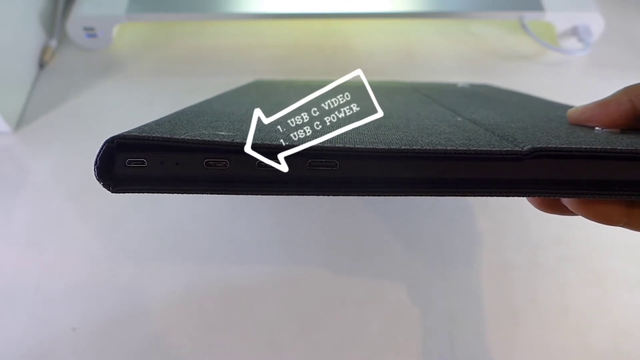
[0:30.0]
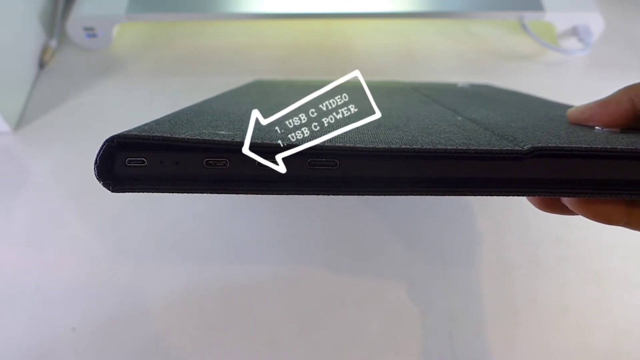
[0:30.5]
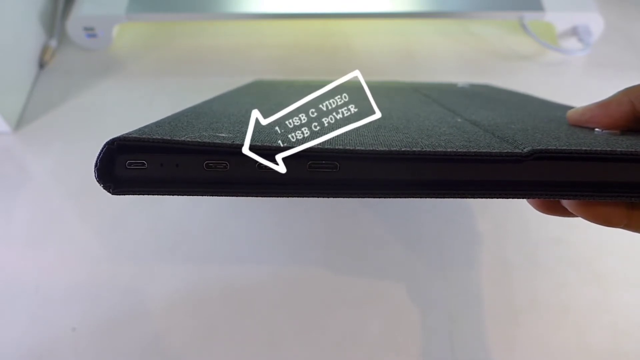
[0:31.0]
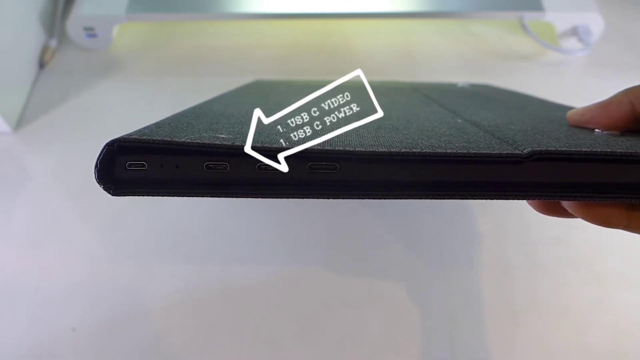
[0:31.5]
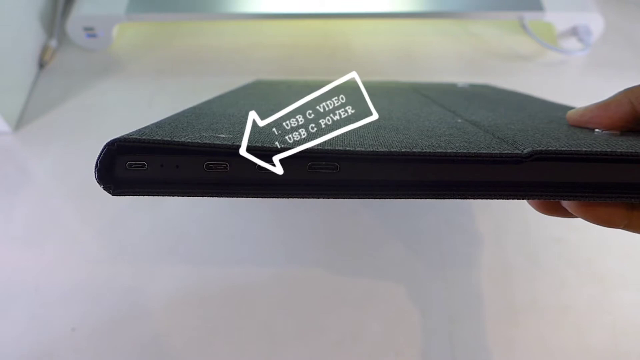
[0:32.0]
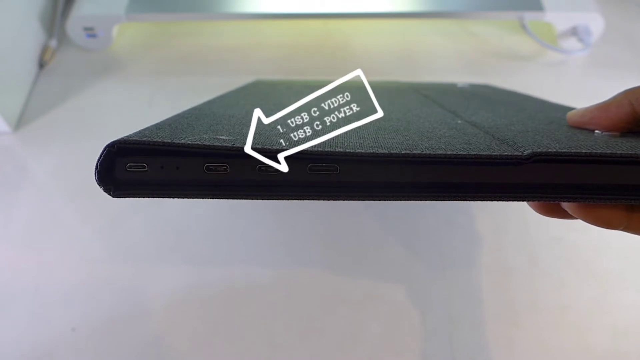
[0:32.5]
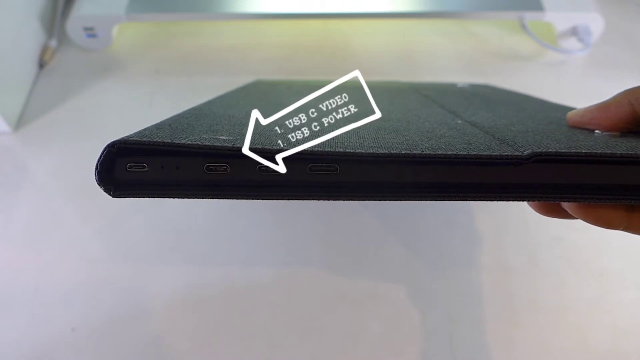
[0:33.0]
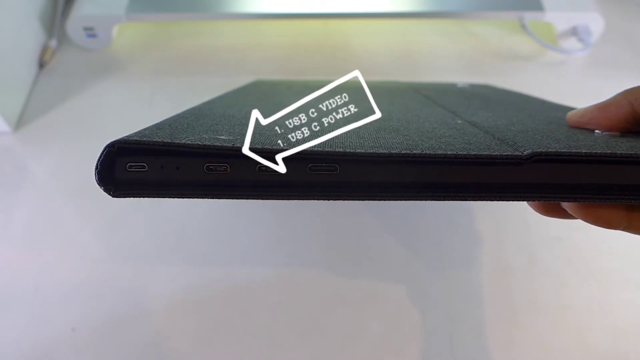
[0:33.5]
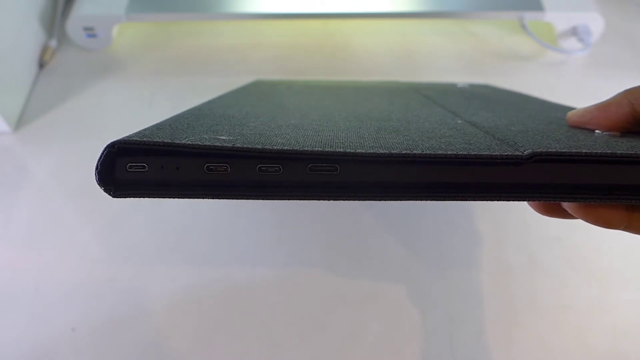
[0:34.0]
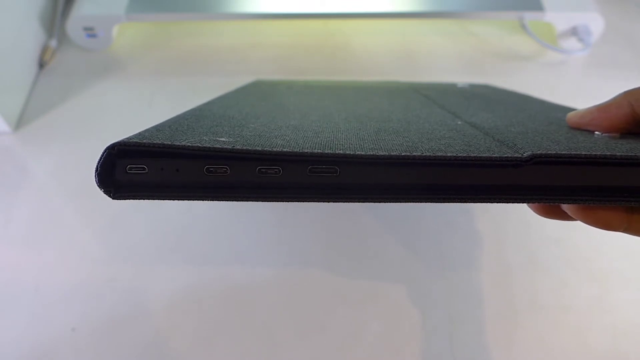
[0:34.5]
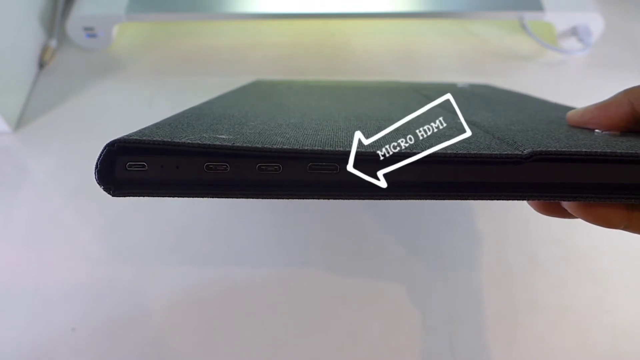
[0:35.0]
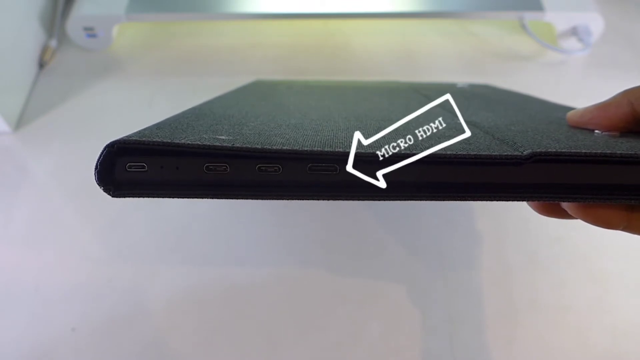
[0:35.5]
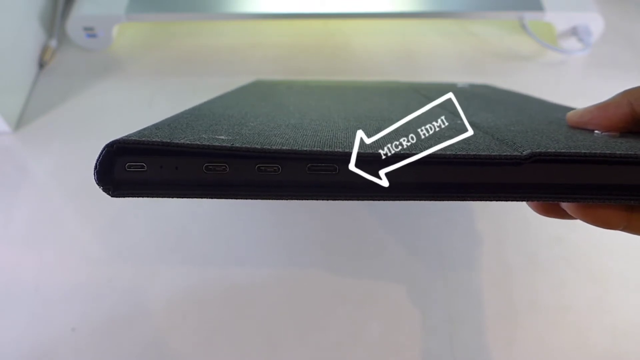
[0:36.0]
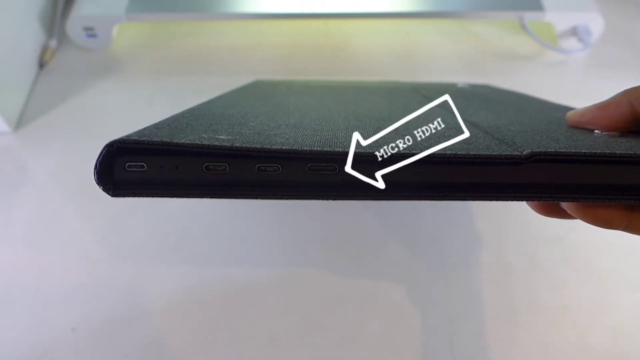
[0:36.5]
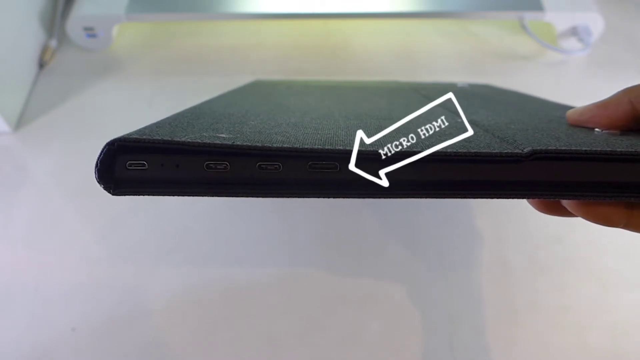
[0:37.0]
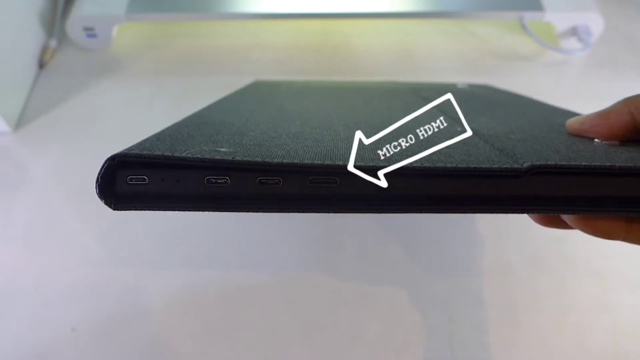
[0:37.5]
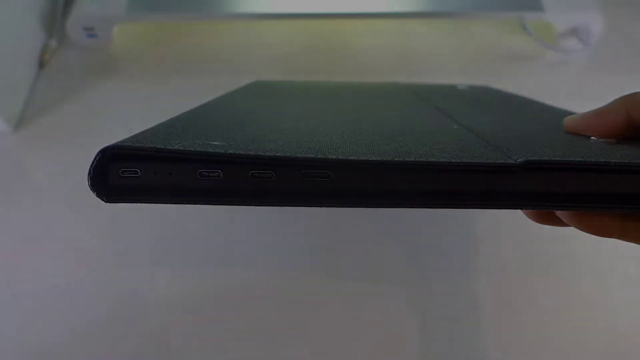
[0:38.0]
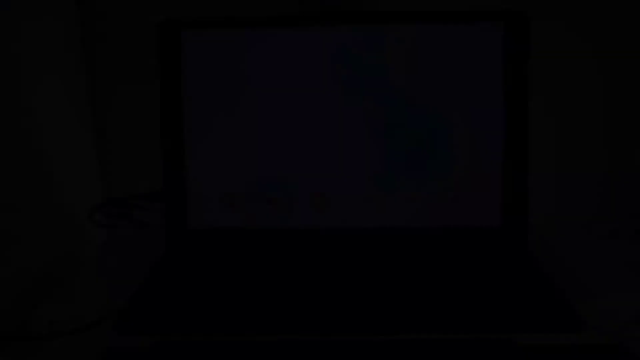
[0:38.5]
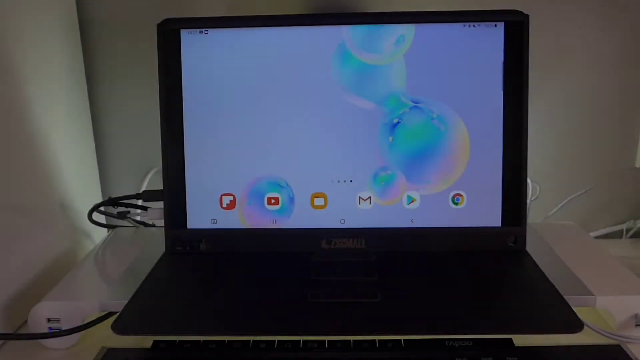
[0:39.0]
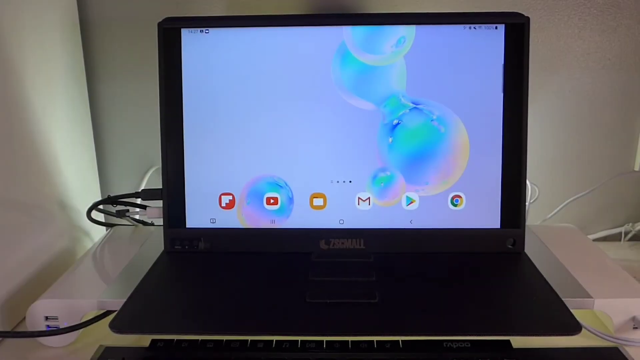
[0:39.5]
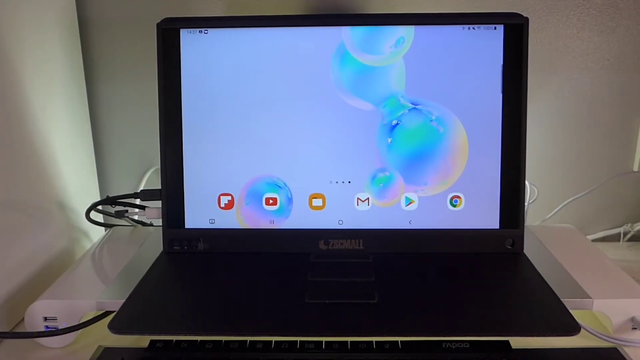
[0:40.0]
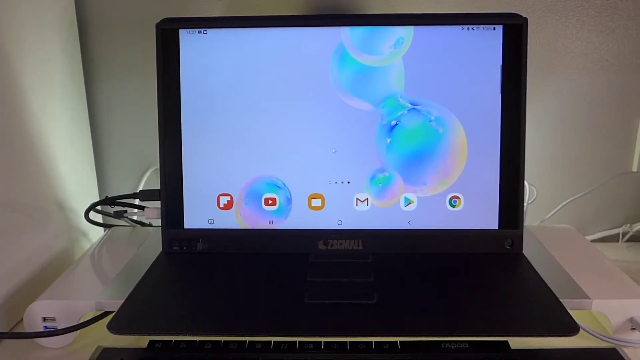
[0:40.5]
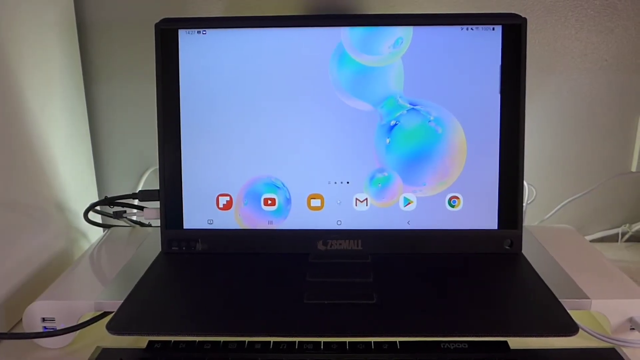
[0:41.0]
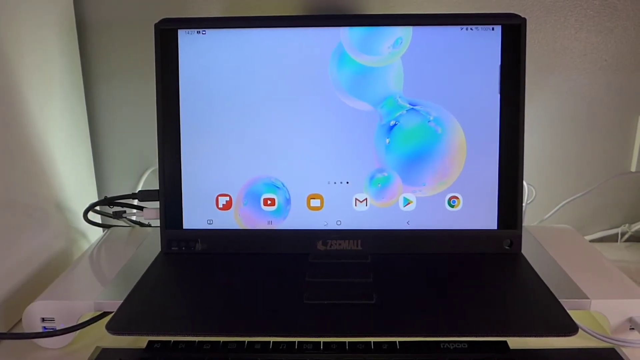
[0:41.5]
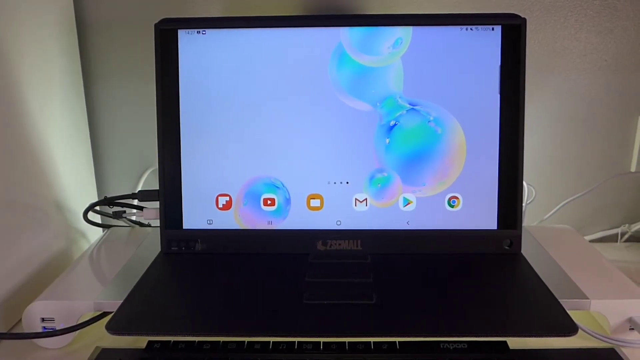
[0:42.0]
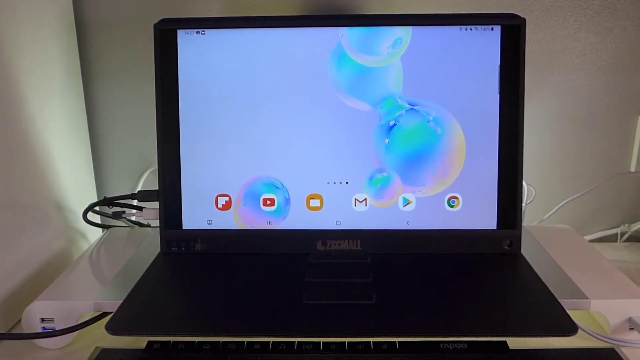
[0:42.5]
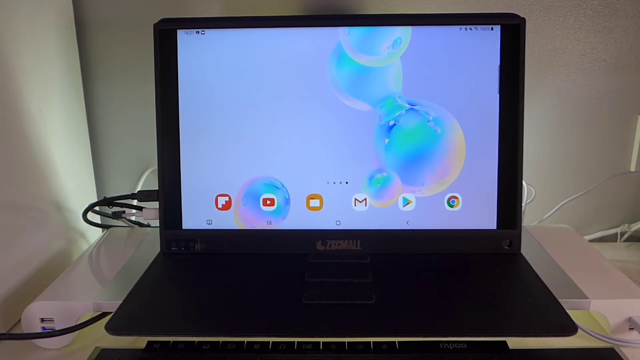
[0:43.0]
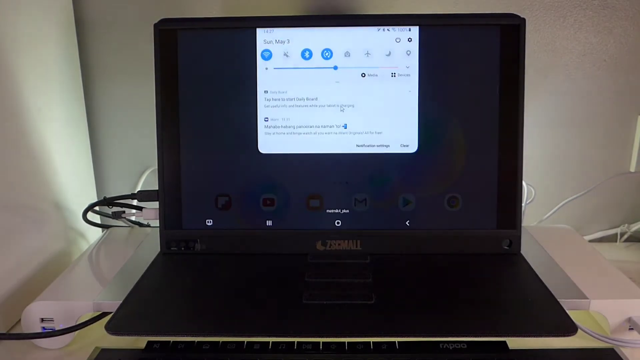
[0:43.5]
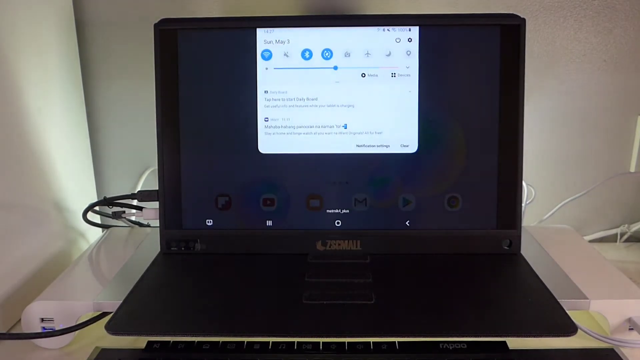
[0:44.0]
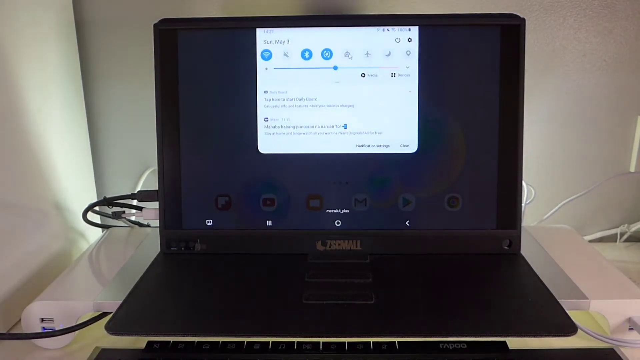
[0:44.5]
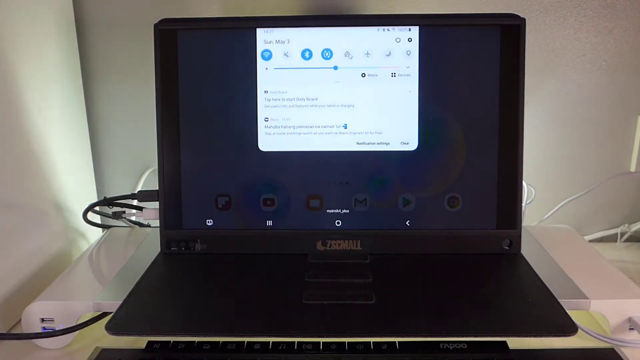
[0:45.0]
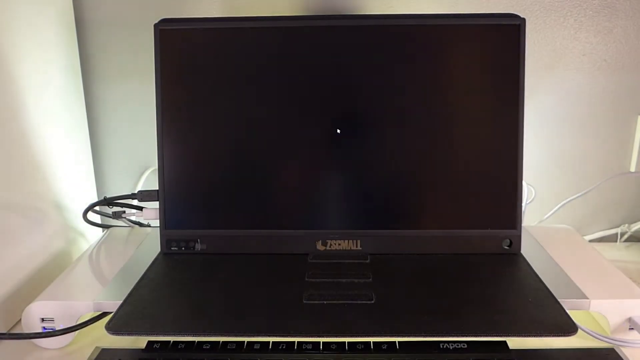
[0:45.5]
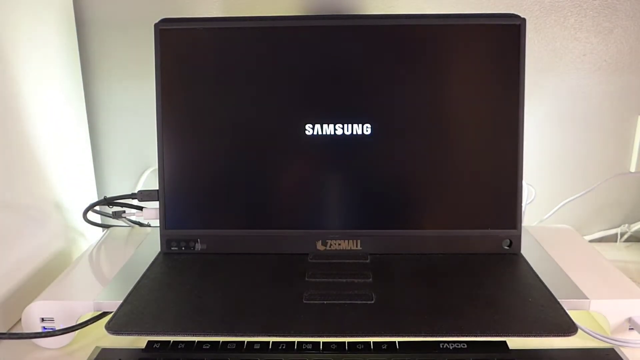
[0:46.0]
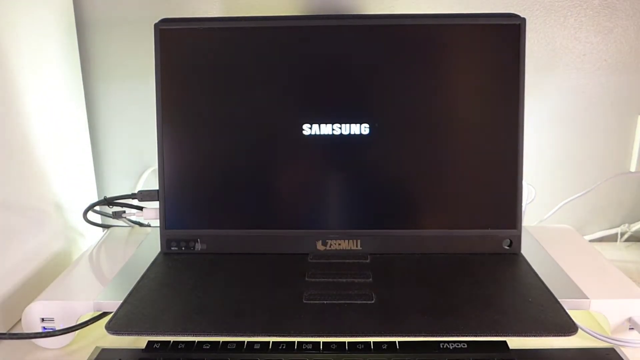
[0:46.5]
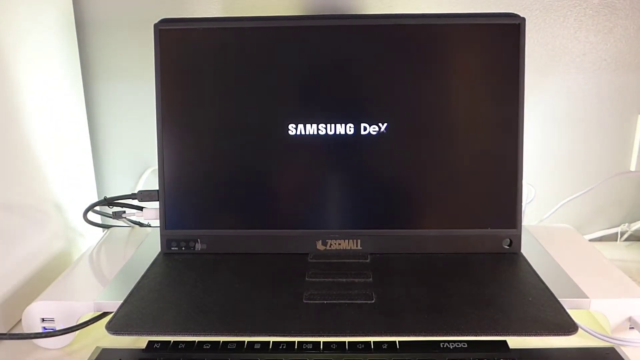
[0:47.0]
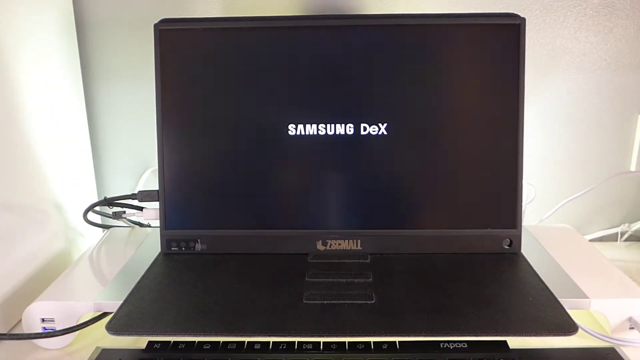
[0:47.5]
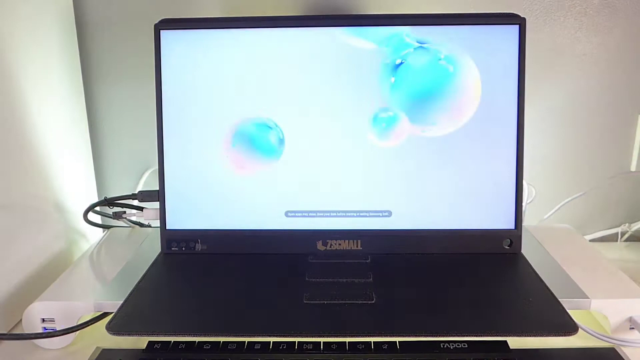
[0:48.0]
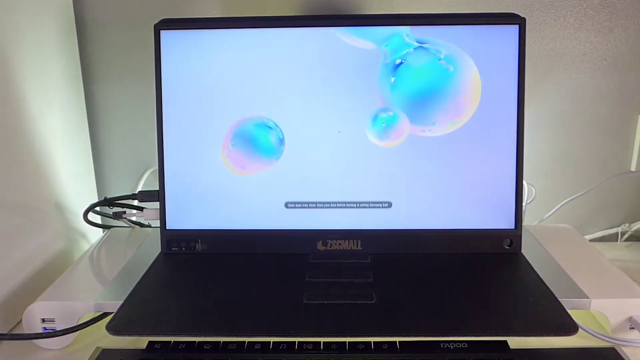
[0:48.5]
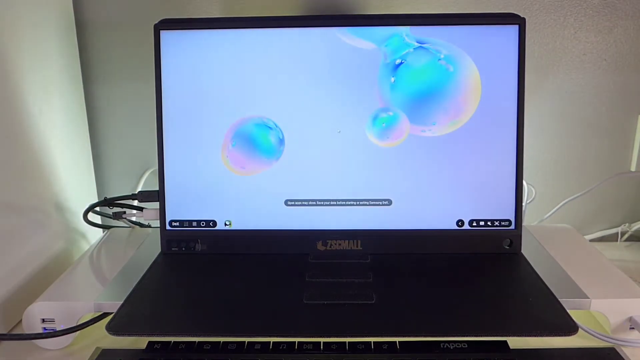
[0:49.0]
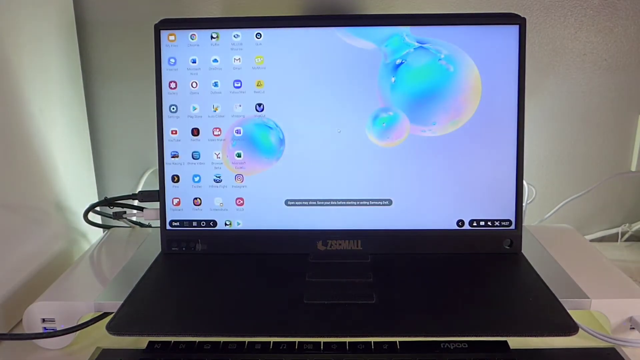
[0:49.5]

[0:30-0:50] The view is a sort of top view down onto a white table in the background. A couple of fingers and a thumb come in from the right-hand side, holding the edge of what is like a black leather case around some sort of screen or tablet, which is also black. Only the bottom or side edge of it is visible, showing four ports on the left-hand side. An overlaid white outline of an arrow, it seems, points at the second port with the text "one USB-C video, one USB-C power". That goes away and another arrow comes in pointing at the fourth and last port, with the words "micro HDMI" in white capital letters. This fades out to black. The view then faces the screen of the device, which kind of looks like a tablet, in the center, with a bunch of cables coming into its left side and some sort of black base of about the same size below it.